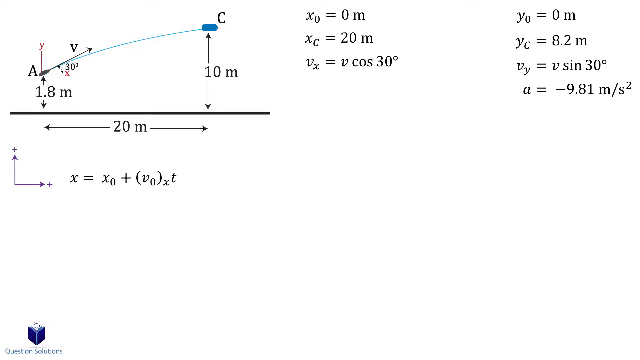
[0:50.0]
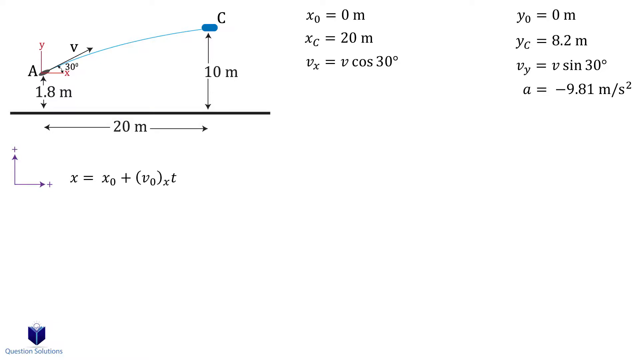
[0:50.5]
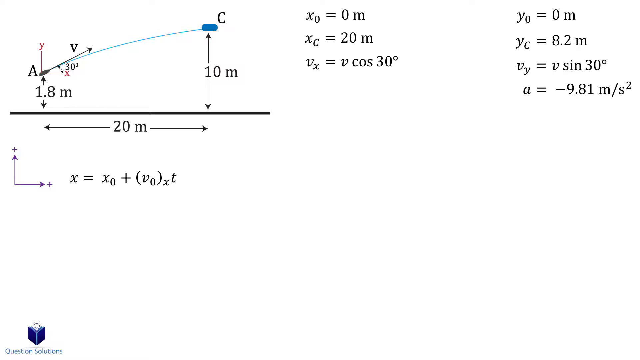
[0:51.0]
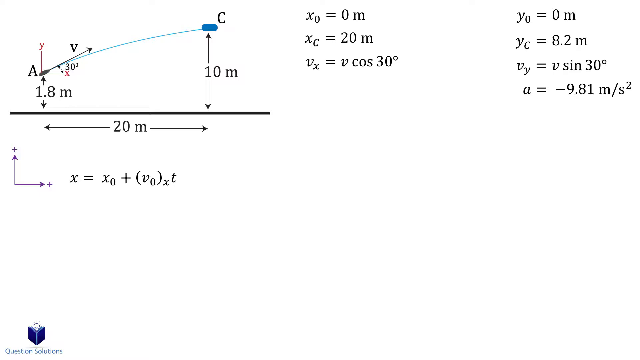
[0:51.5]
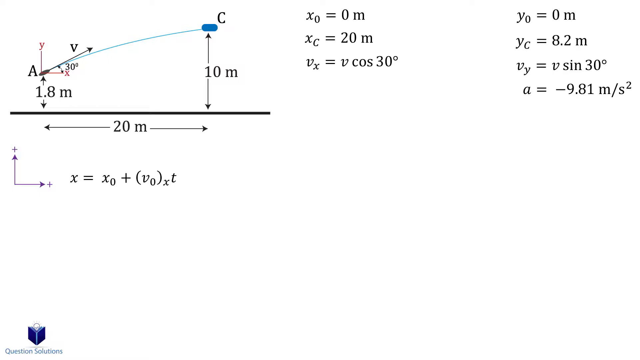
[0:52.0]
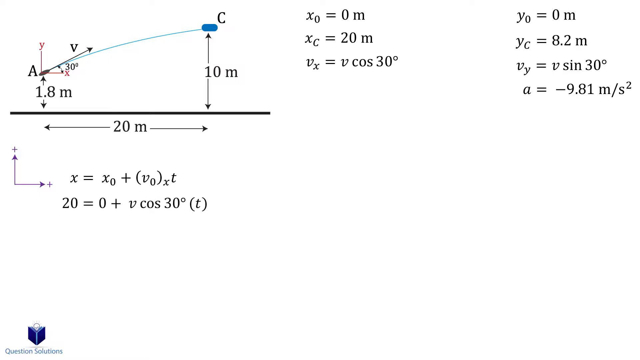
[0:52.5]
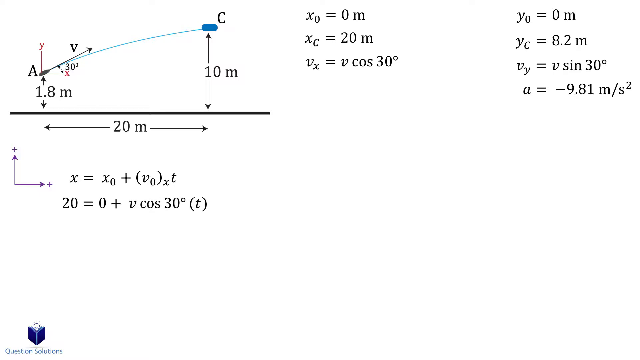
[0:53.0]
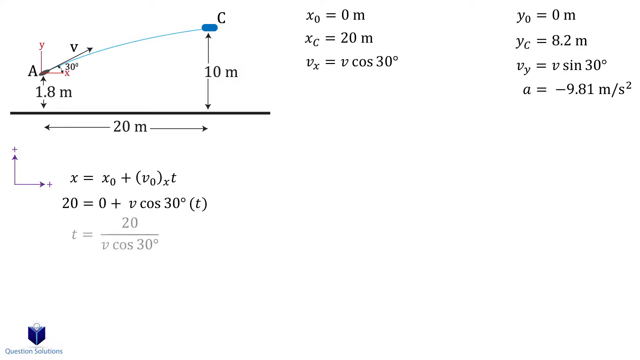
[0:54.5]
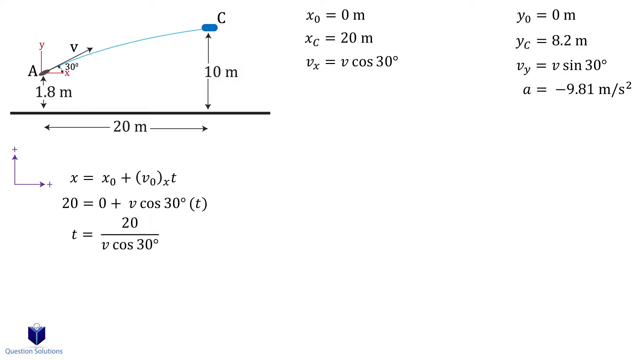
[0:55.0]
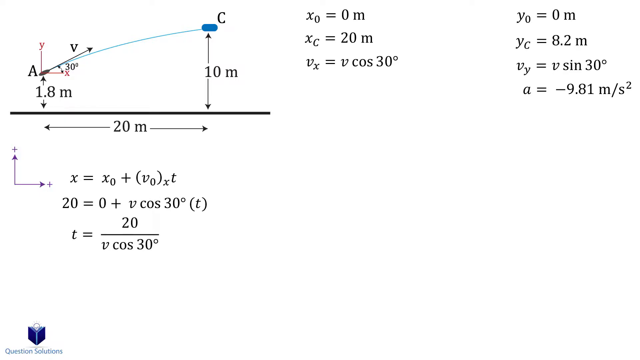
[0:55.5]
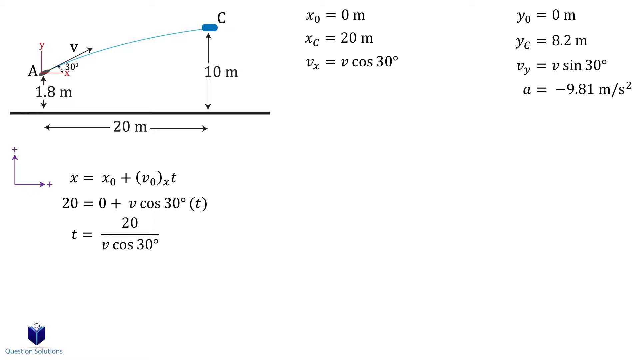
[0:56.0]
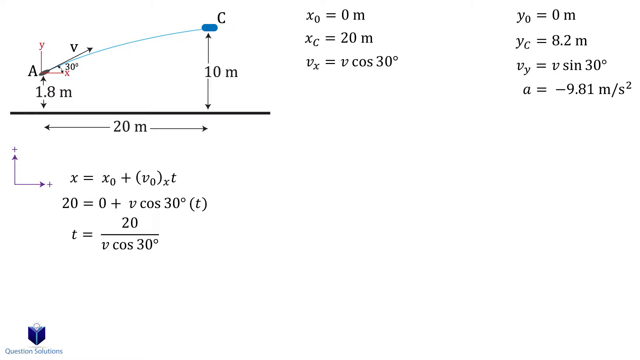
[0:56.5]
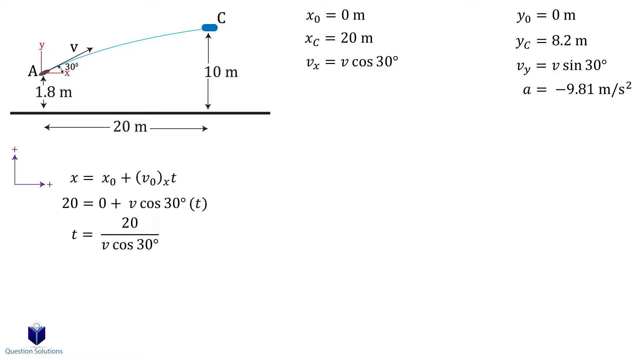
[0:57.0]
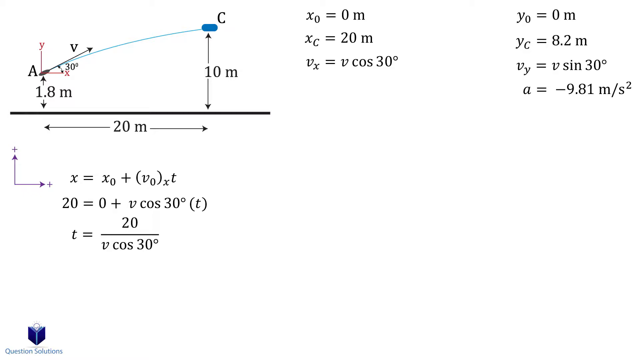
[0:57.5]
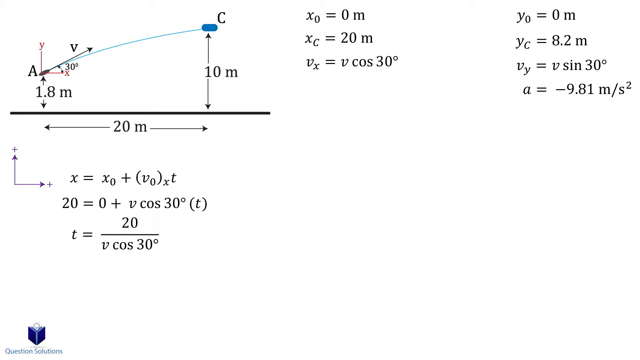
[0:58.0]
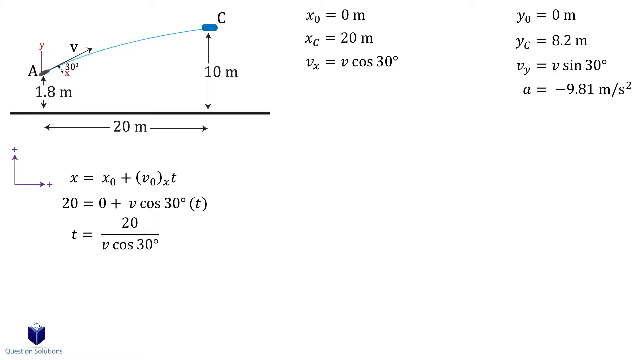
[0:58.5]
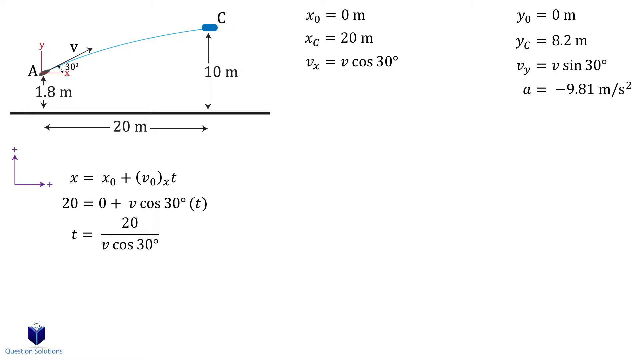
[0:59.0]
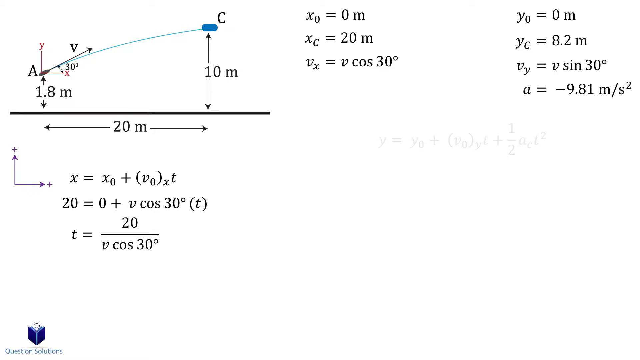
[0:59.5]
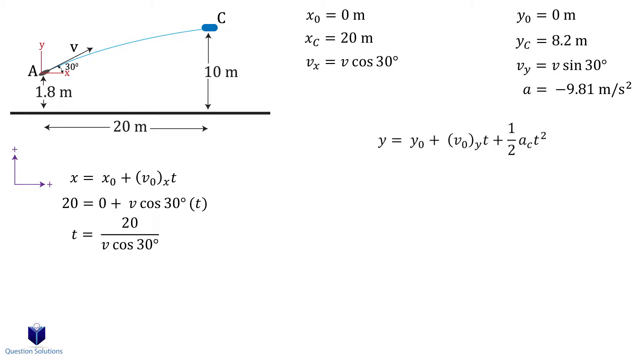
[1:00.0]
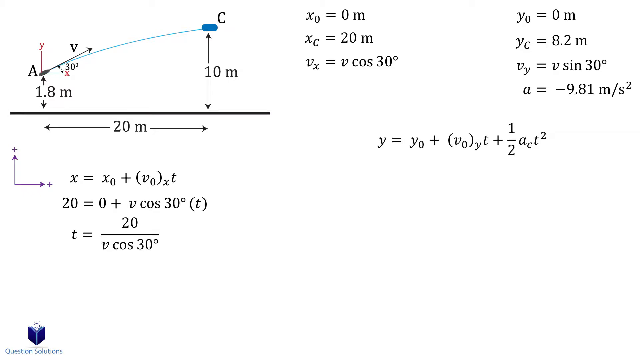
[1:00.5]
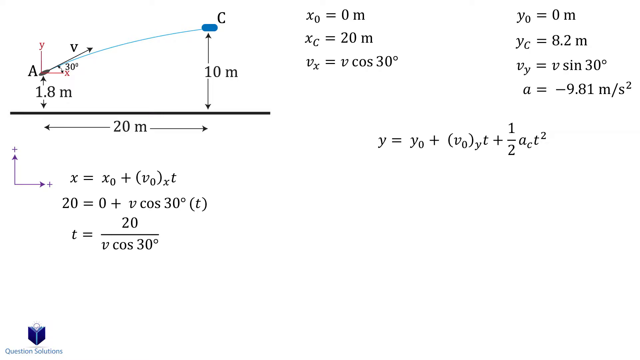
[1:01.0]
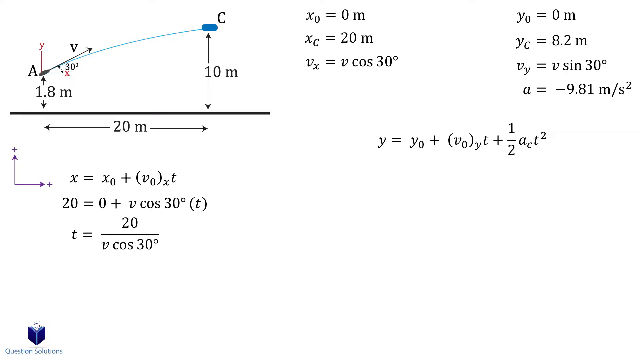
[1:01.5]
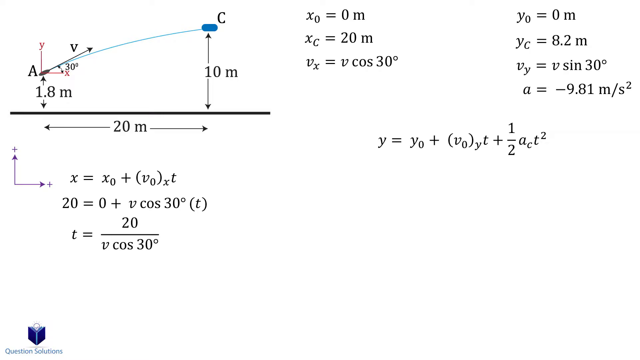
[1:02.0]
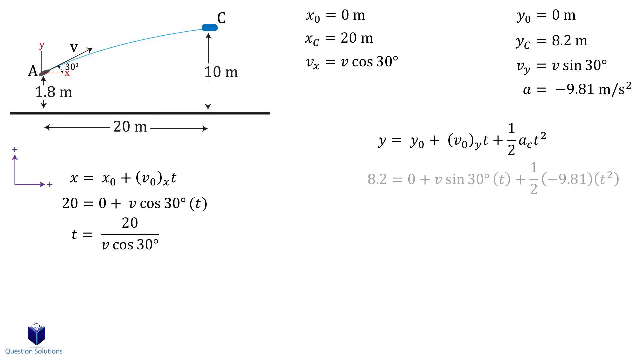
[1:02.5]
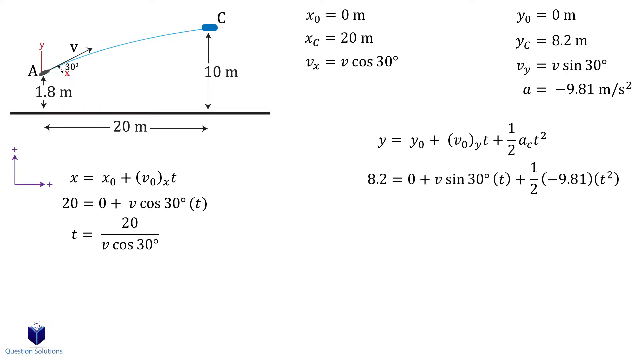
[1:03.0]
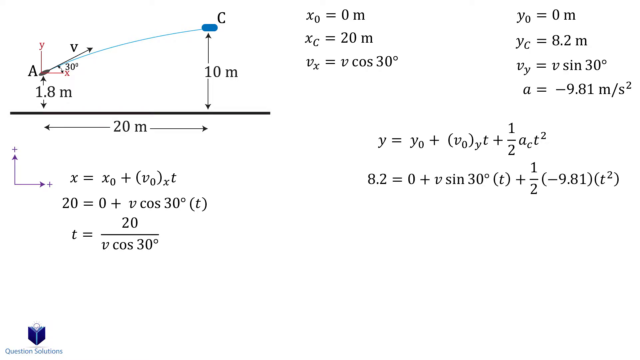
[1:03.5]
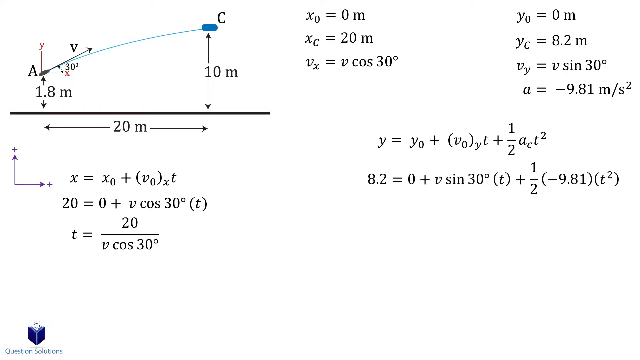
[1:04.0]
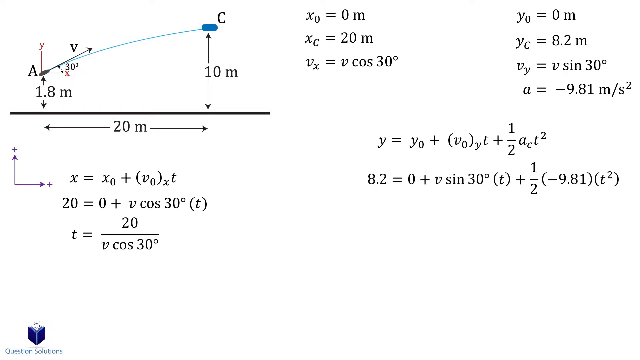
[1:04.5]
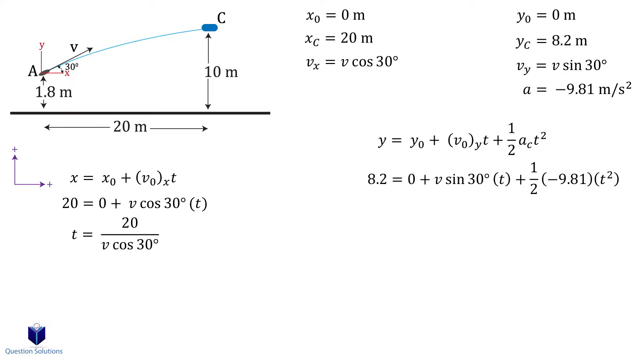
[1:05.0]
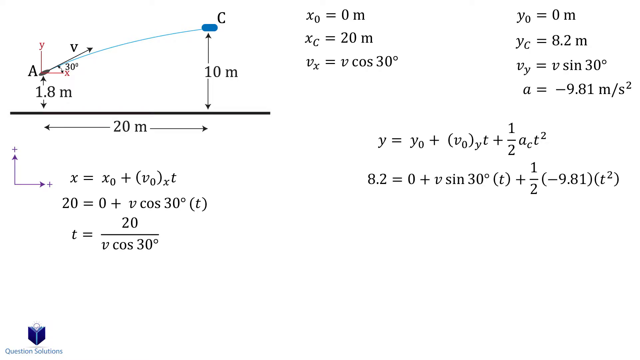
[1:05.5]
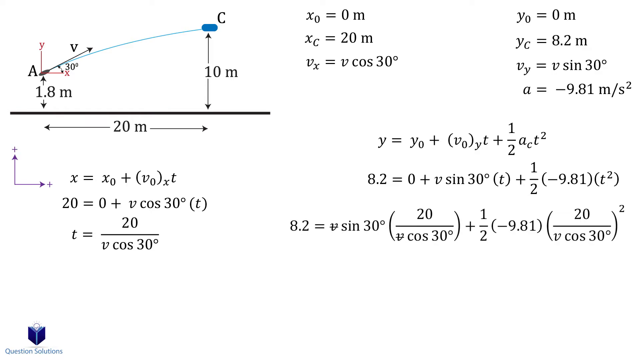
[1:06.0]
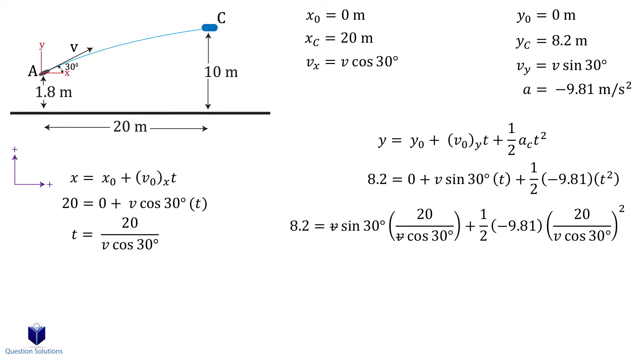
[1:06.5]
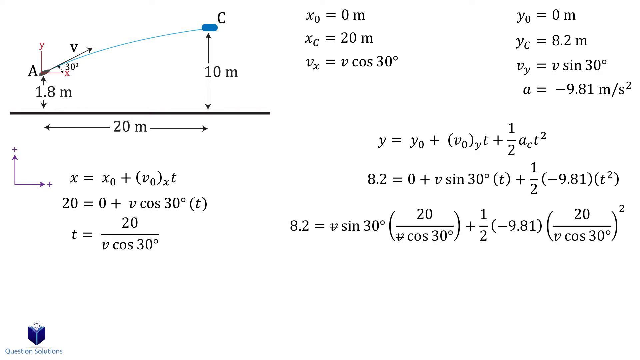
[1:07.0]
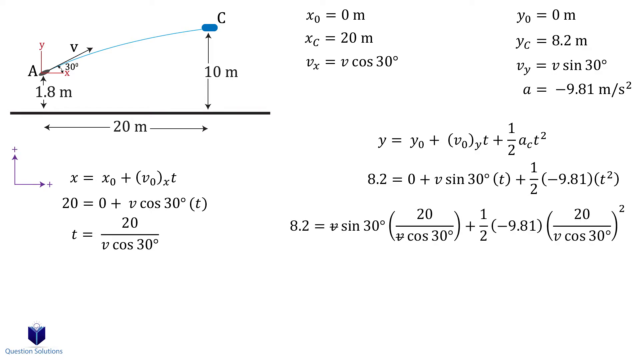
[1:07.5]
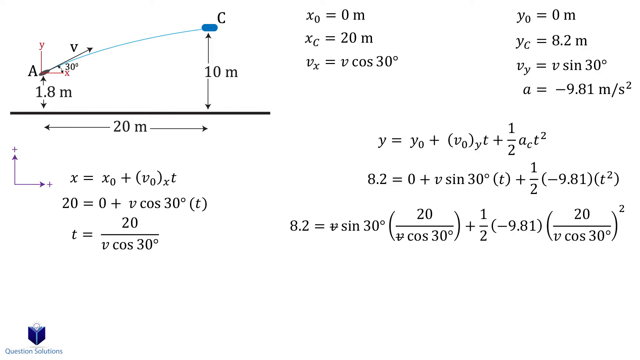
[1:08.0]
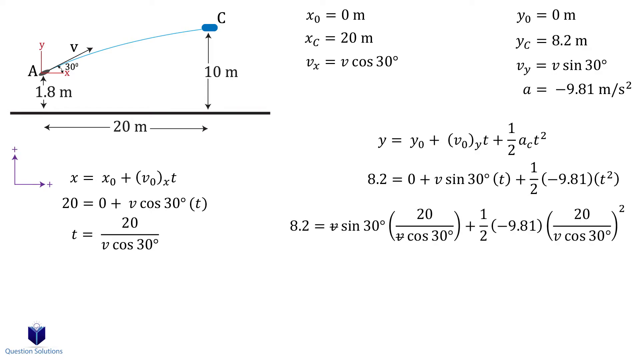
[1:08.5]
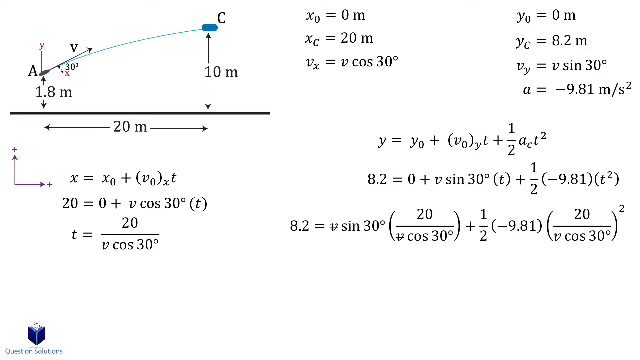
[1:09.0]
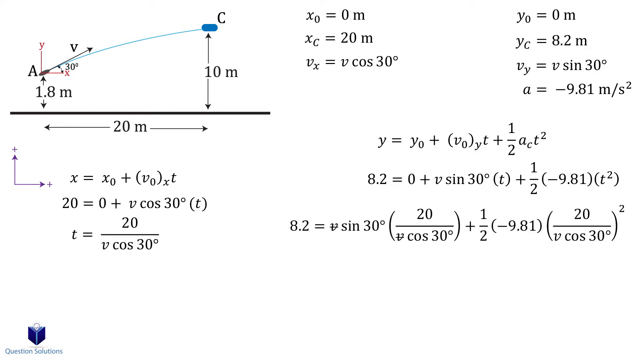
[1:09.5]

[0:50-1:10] The white screen still has the graph in the top left corner, with numbers and letters in a small font. New equations in small black text have appeared on the right side of the screen: "yc equals 8.2m," beneath it "vy equals v sin 30 degrees," and beneath that "a equals negative 9.81m/s2." At the bottom of the screen are new equations for the x coordinates: "x equals x0 plus (v0)x t" and, beneath it, "20 equals 0 plus v cos 30 degrees (t)." To the left of these equations are thin purple 90-degree angle arrows, located on the far left of the screen.